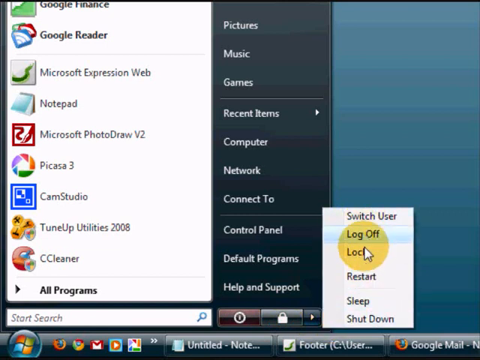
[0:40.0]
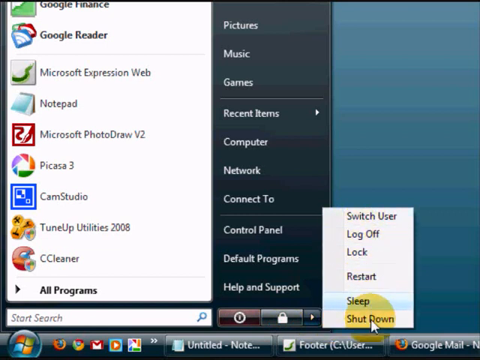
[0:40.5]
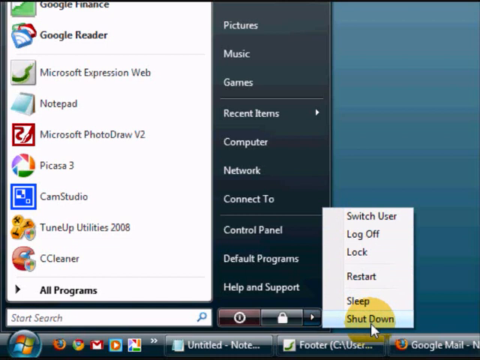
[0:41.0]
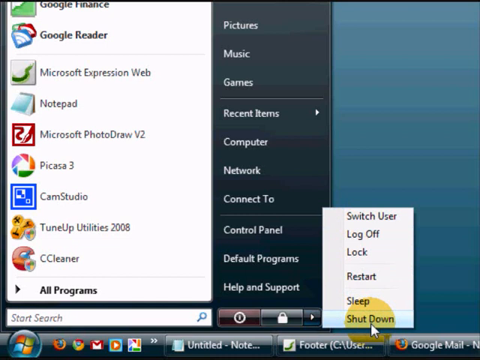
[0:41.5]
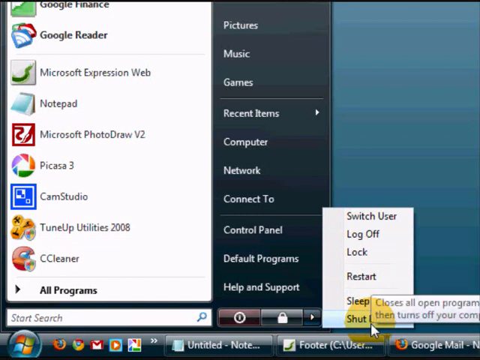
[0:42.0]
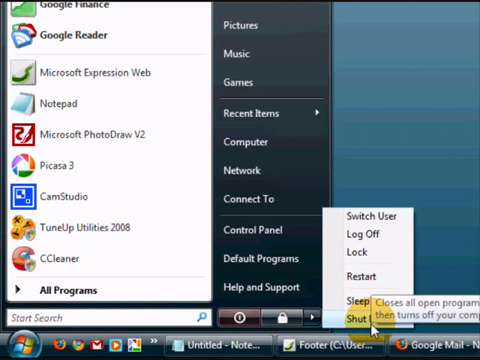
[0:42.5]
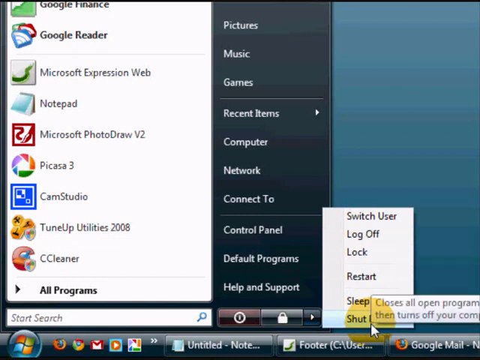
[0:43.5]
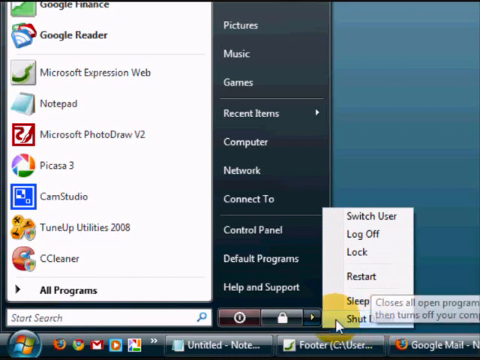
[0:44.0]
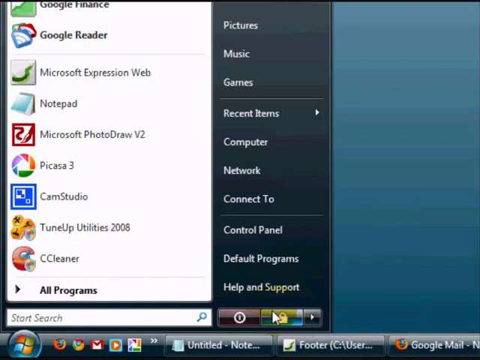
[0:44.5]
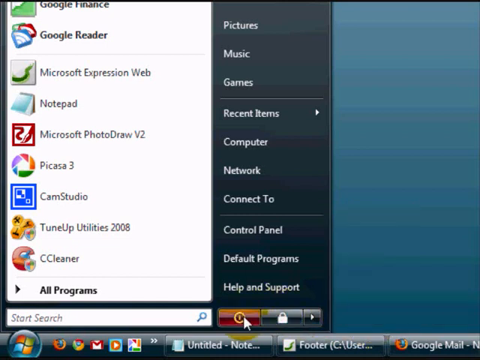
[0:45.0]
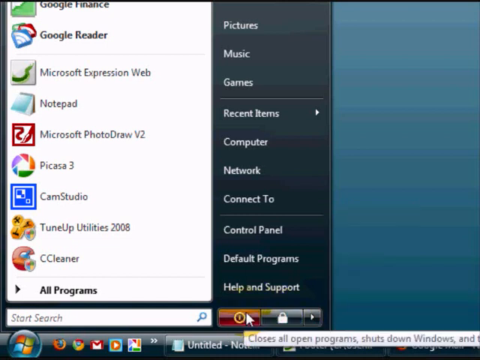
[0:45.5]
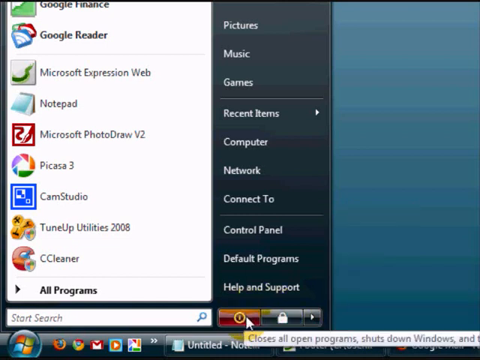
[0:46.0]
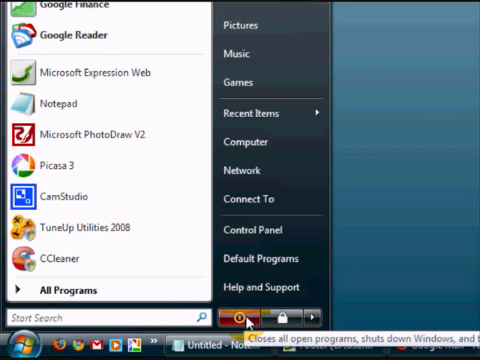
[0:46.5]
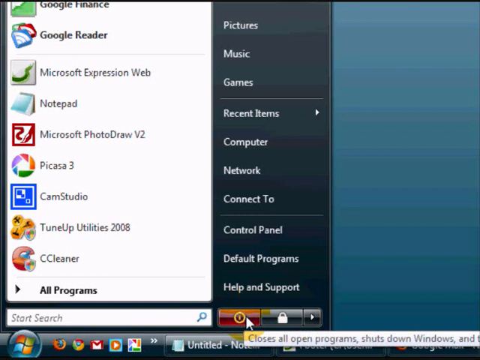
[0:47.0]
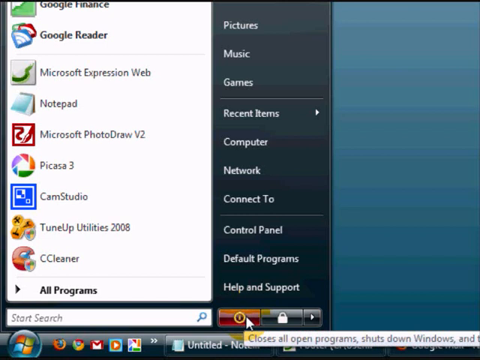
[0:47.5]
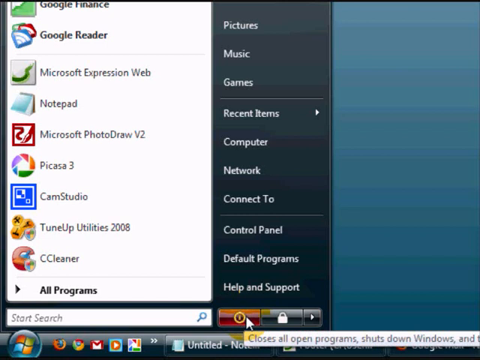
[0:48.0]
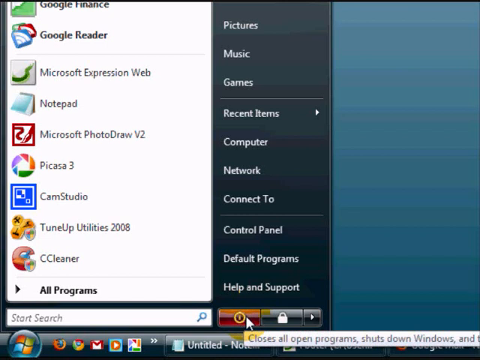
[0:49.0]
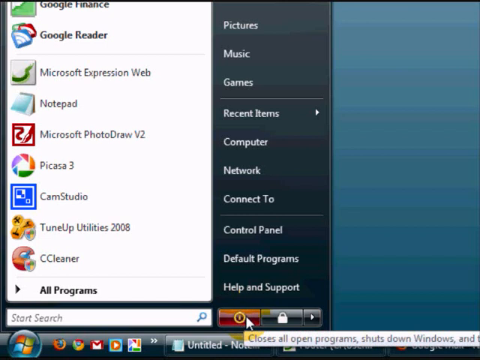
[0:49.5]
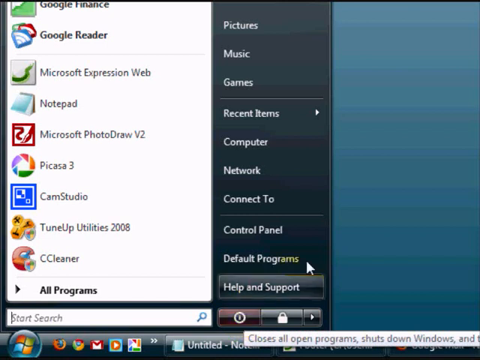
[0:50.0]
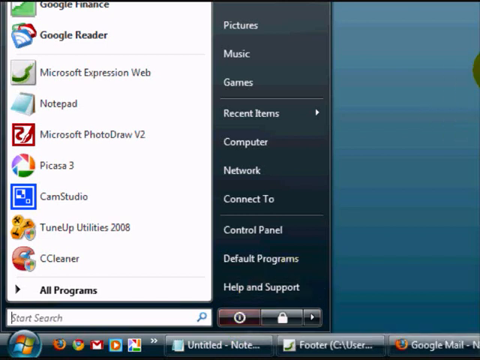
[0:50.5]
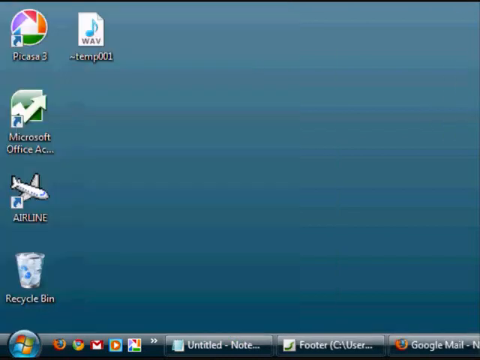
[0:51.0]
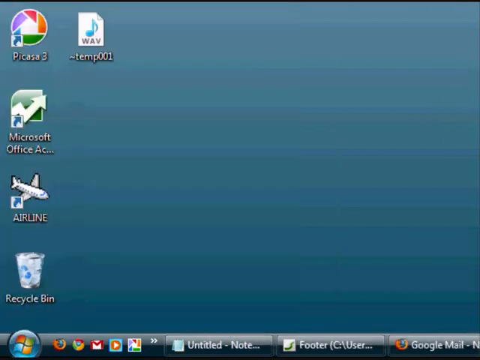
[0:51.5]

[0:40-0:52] On a computer screen, the right side is blue. On the left side, a menu reads from the top down: "Google Finance," "Google Reader," "Microsoft Expression Web," "Notepad," "Microsoft PhotoDraw V2," "Picasa 3," "Cam Studio," "TuneUp Utilities 2008," "CCleaner," and "All Programs." Below that is a search bar, and to the right of that is an off button, then a padlock, then a right arrow. Above all this, on a black background, reading upward, are "Help and Support," "Default Programs," "Control Panel," "Connect To," "Network," "Computer," "Recent Items," "Games," "Music," and "Pictures." To the right of the bottom of this is another drop-down menu reading, top to bottom, "Switch User," "Log Off," "Lock," "Restart," "Sleep," and "Shut Down." A mouse cursor with a yellow circle around it moves up and down these options. It goes to the shut-down option, and a small notification appears saying "Closes all open programs, then turns off your computer." The cursor then moves back over, and a notification says "Closes all open programs."